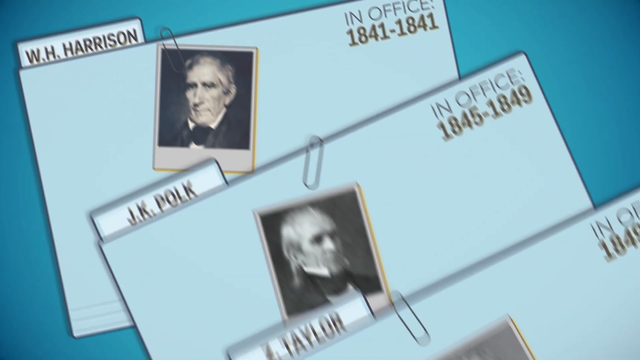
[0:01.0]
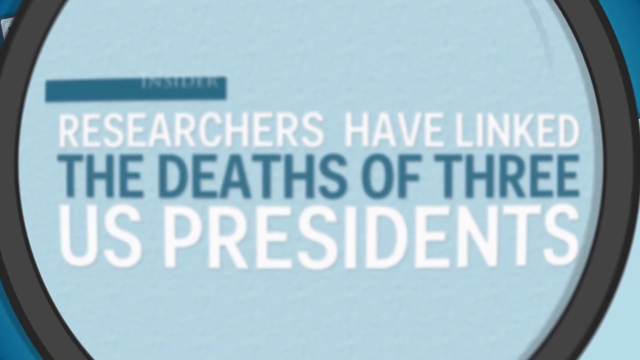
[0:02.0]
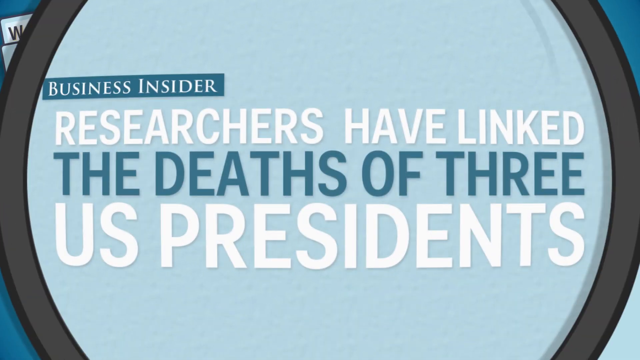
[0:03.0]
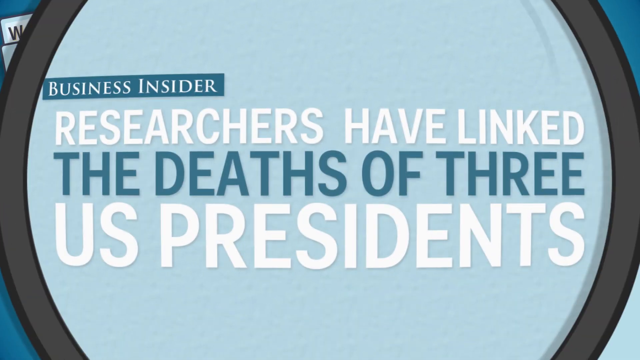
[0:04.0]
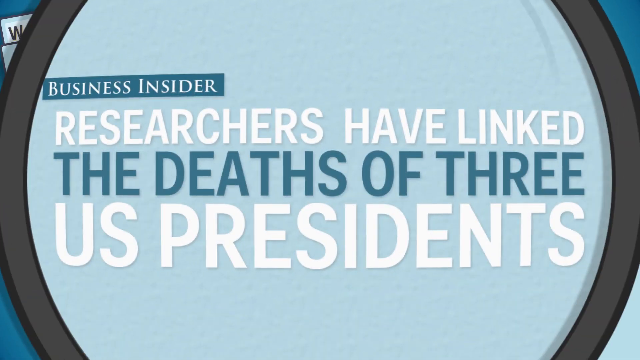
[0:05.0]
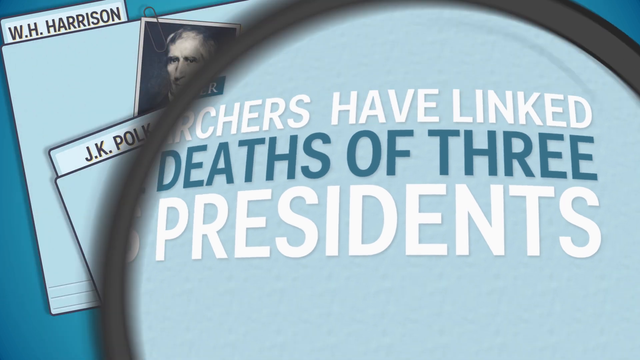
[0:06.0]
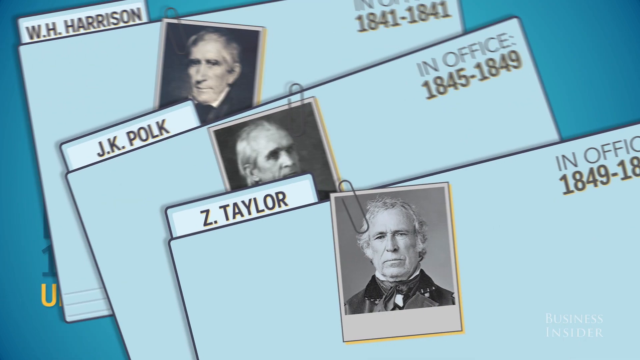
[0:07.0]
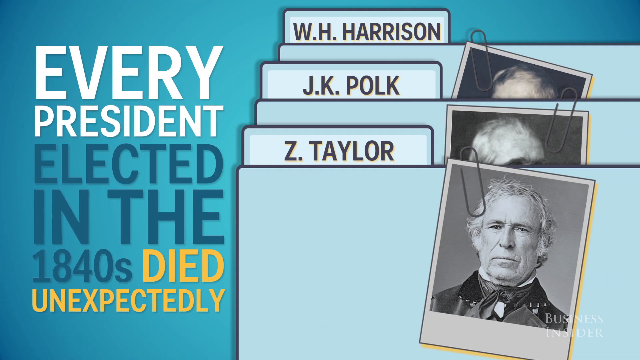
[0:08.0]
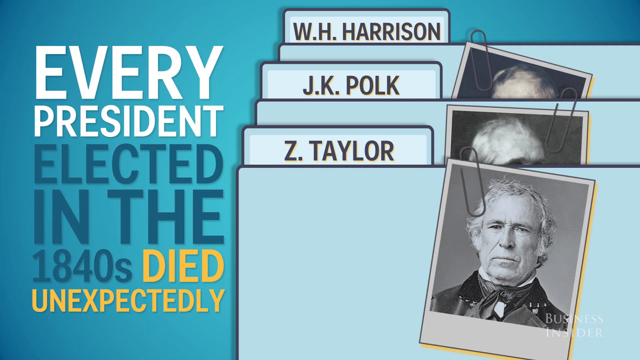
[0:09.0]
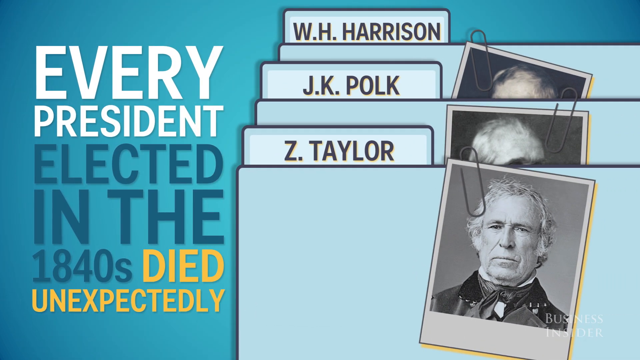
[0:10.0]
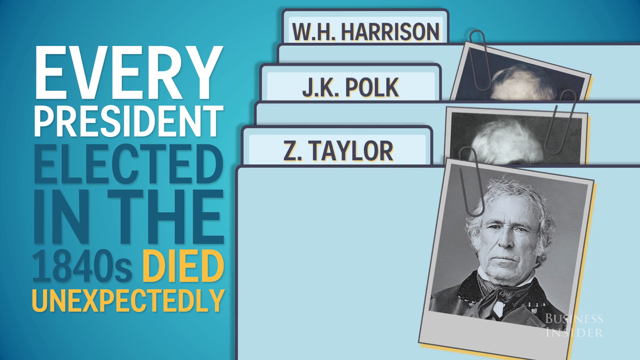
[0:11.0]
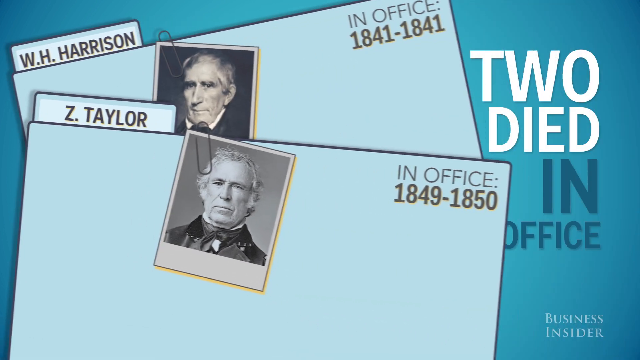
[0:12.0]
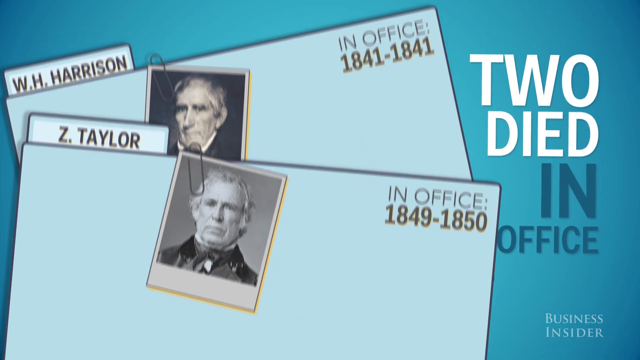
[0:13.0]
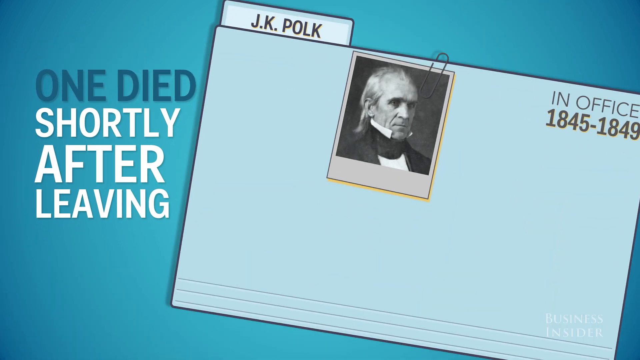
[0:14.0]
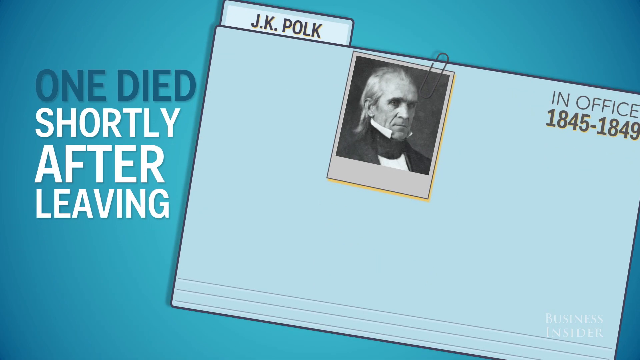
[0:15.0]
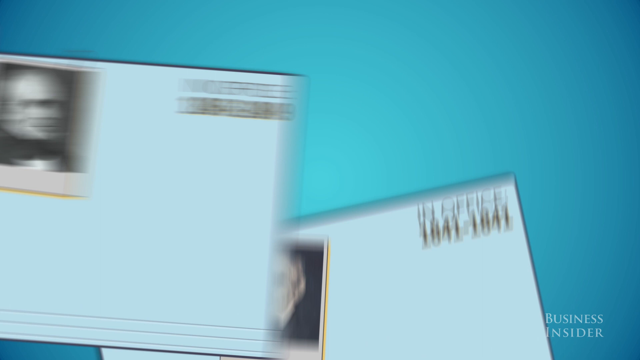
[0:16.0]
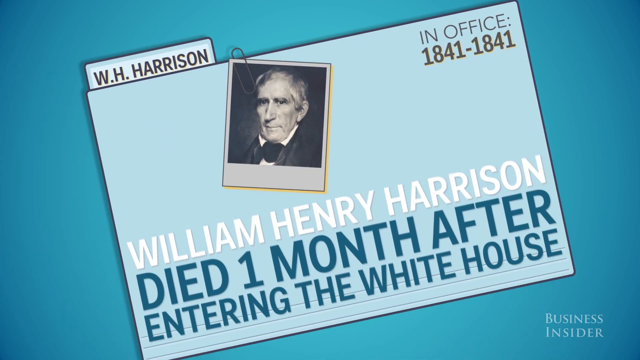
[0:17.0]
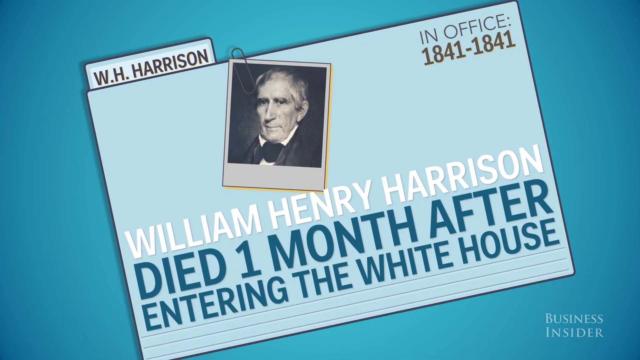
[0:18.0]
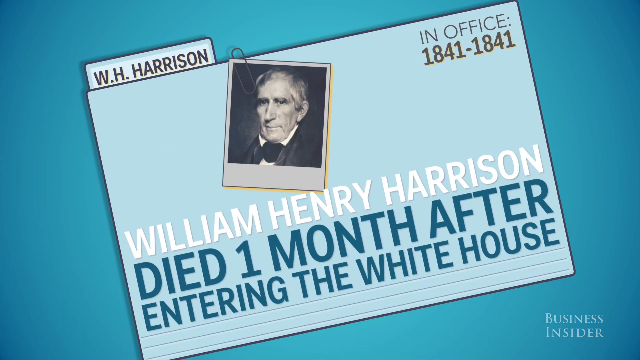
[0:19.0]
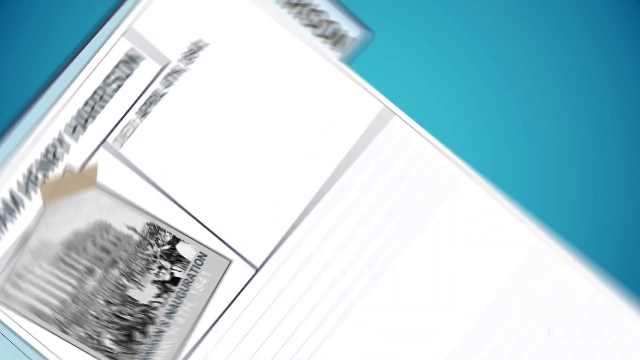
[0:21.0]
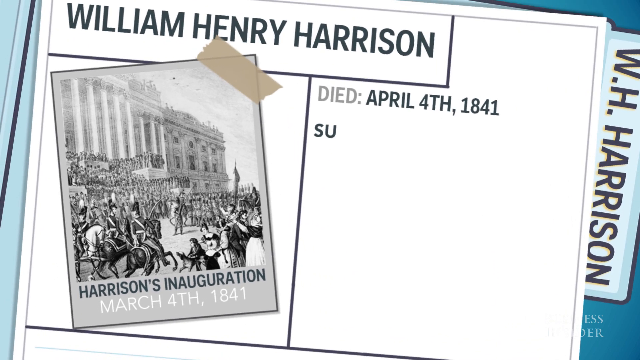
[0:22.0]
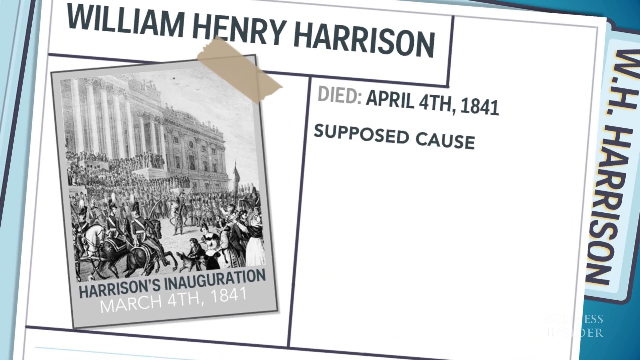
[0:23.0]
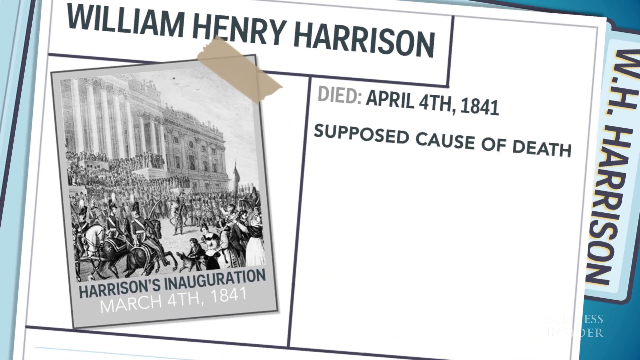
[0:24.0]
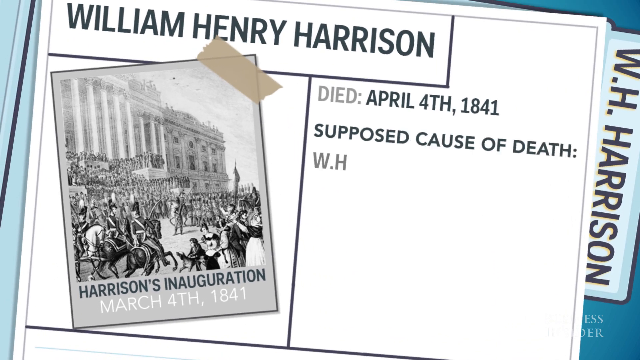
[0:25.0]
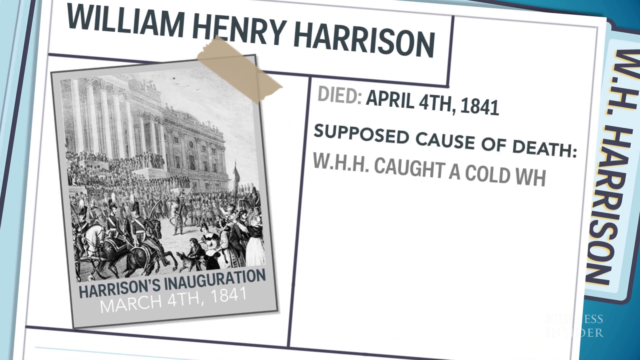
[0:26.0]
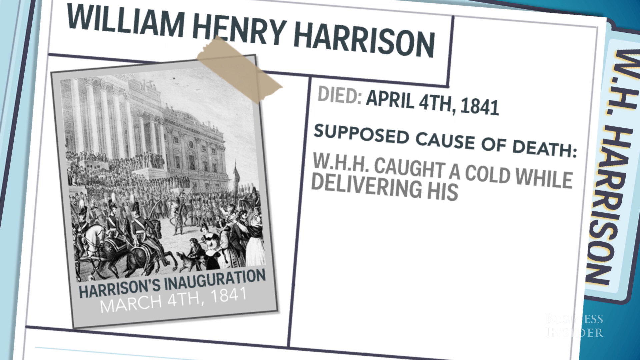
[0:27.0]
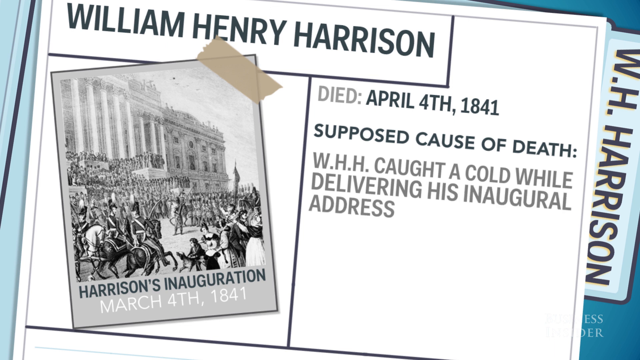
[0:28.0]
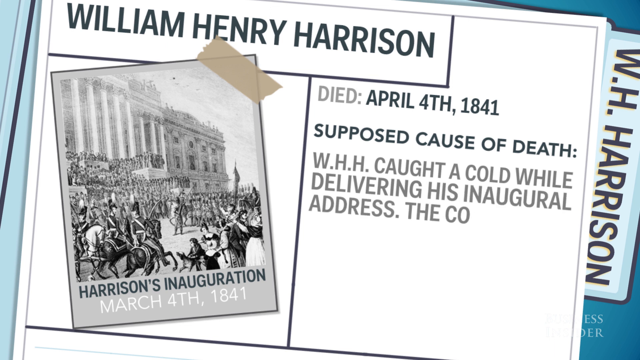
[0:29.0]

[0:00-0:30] A blue circle outlined in black contains the words "Business Insider," followed by the text "Researchers have linked the deaths of three US presidents." Three images of folders follow, each with a picture paper-clipped to it: the first labeled "Z. Taylor," the second "J.K. Polk," and the third "W.H. Harrison." On the left side of this part, text reads "every president elected in the 1840s died unexpectedly." The video then shows that two died in office, Harrison and Taylor, and one, J.K. Polk, died shortly after leaving. The Harrison folder comes up again, showing he was in office from 1841 to 1841 and died one month after entering the White House. Next is an image of Harrison's inauguration on March 4th, 1841, with text reading "William Henry Harrison died April 4th, 1841." His supposed cause of death is given as catching a cold while delivering his inaugural address, with the cold turning into deadly pneumonia.